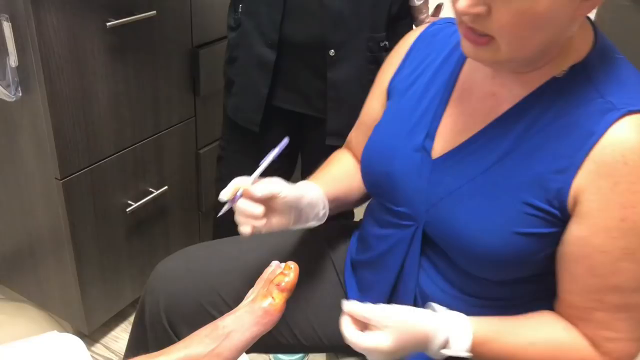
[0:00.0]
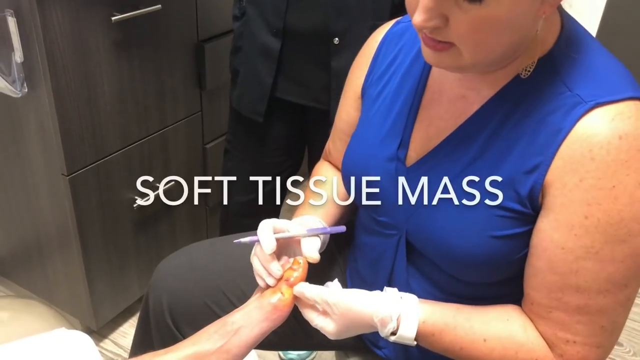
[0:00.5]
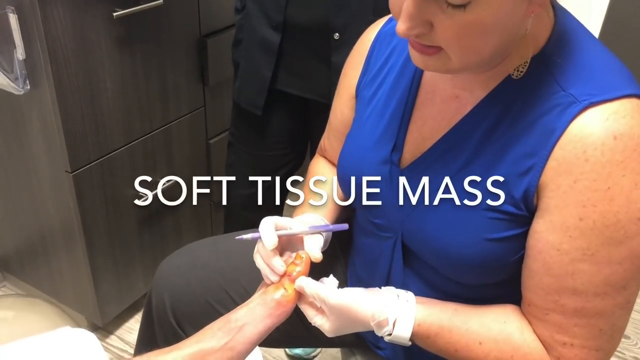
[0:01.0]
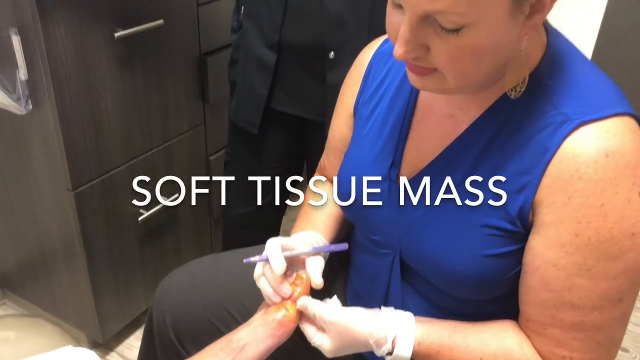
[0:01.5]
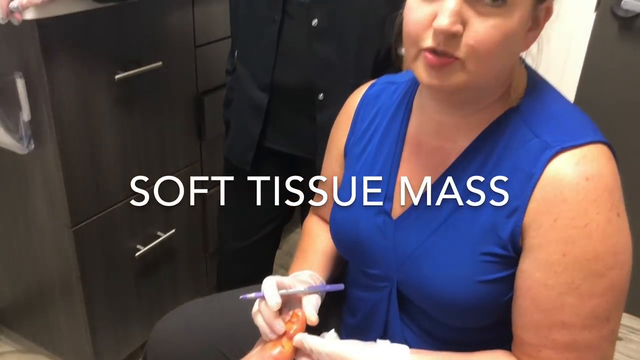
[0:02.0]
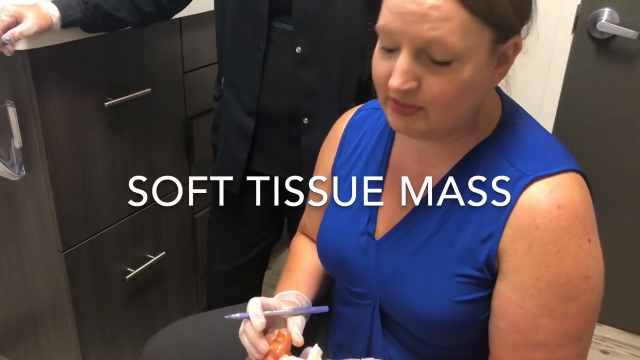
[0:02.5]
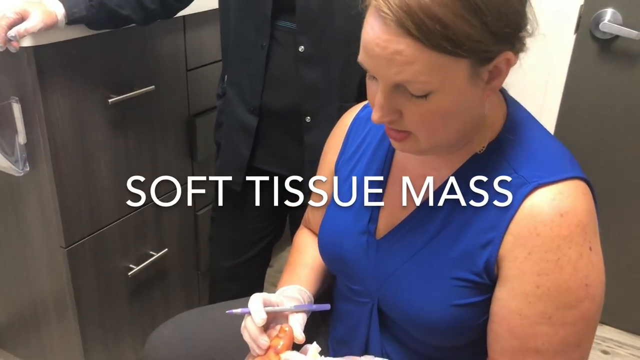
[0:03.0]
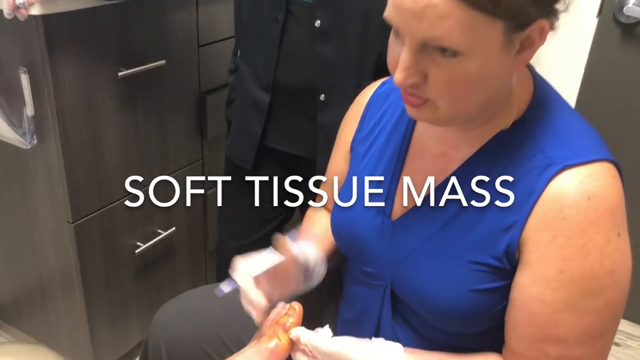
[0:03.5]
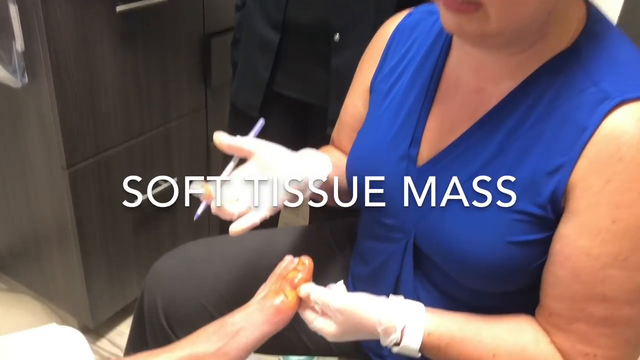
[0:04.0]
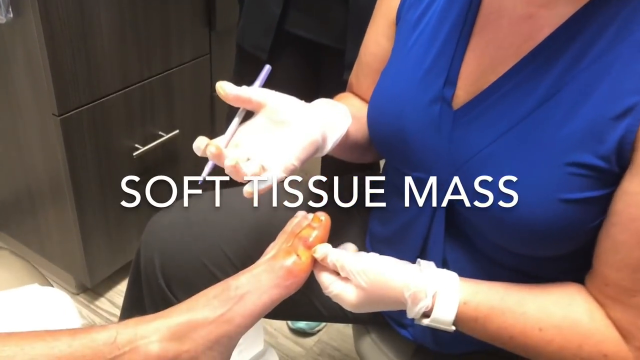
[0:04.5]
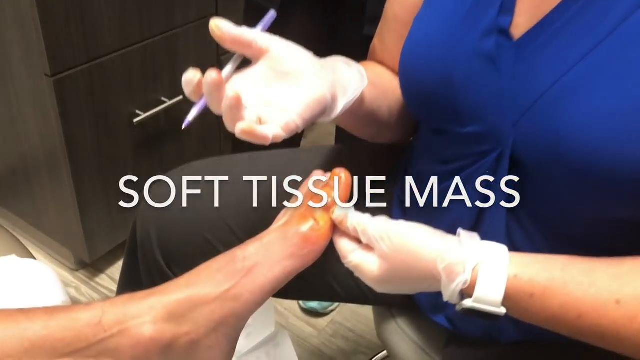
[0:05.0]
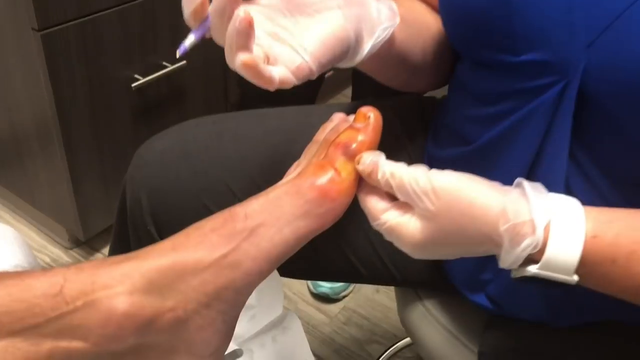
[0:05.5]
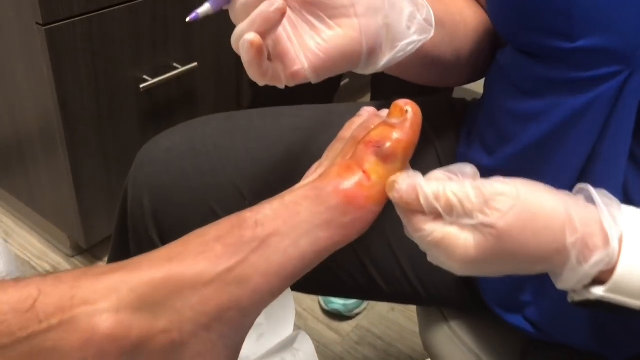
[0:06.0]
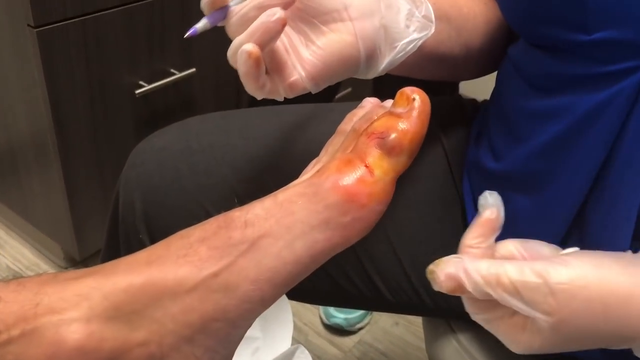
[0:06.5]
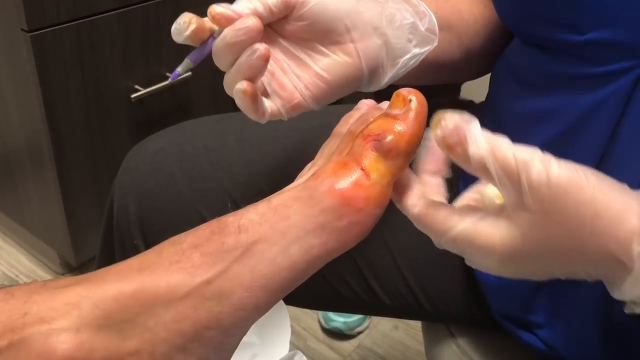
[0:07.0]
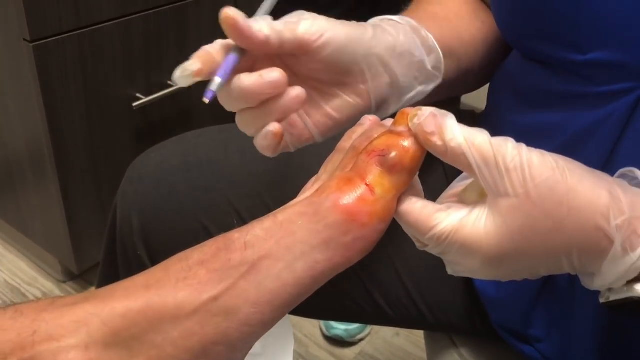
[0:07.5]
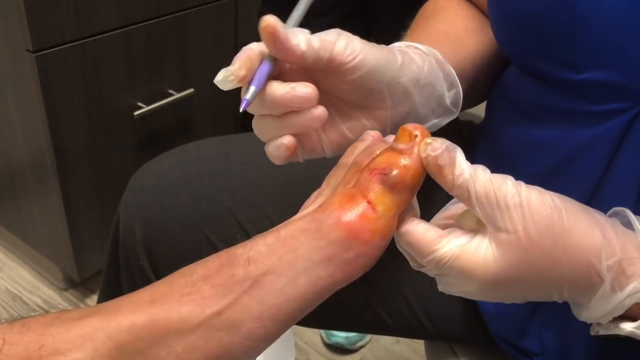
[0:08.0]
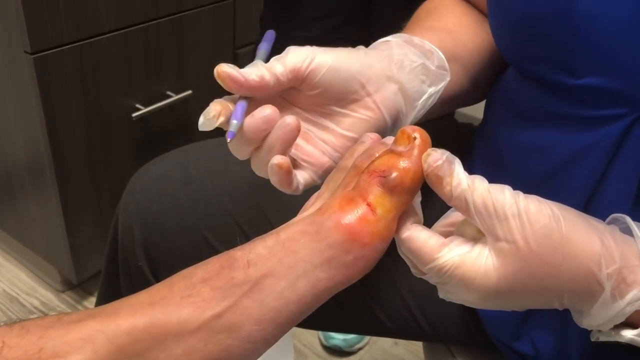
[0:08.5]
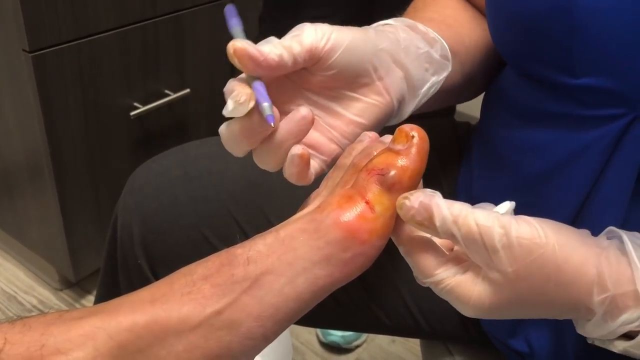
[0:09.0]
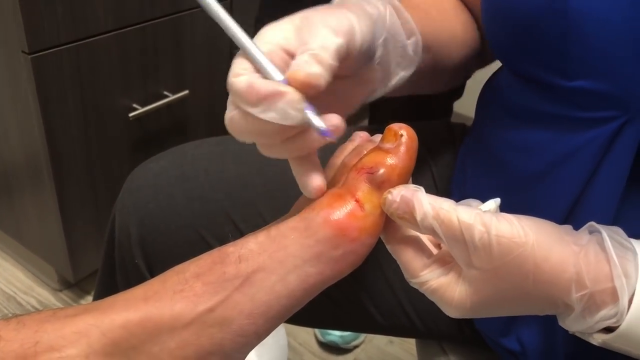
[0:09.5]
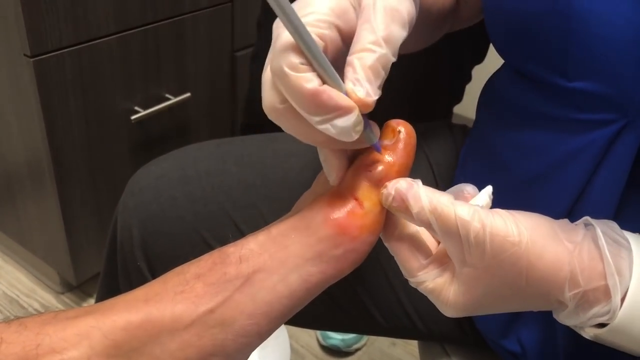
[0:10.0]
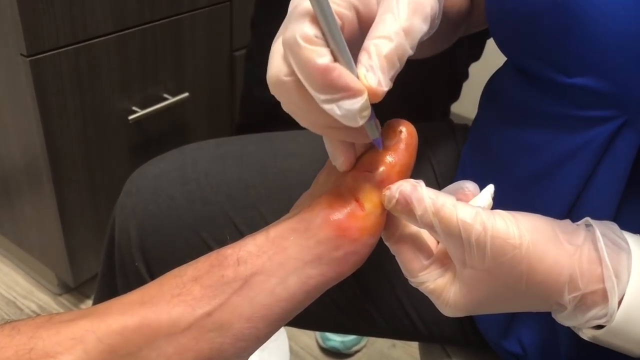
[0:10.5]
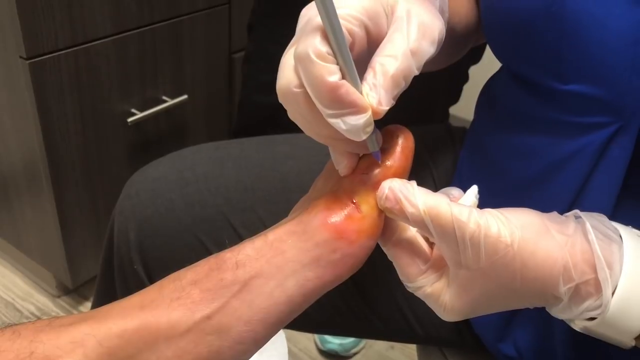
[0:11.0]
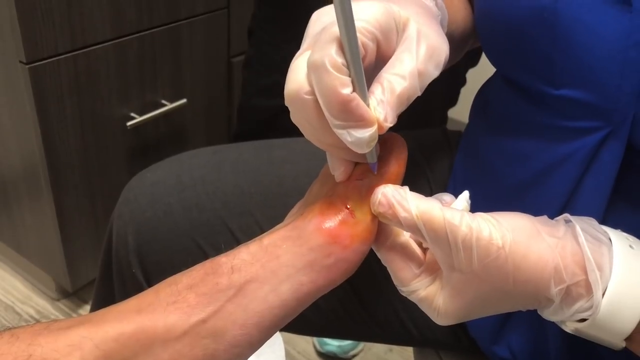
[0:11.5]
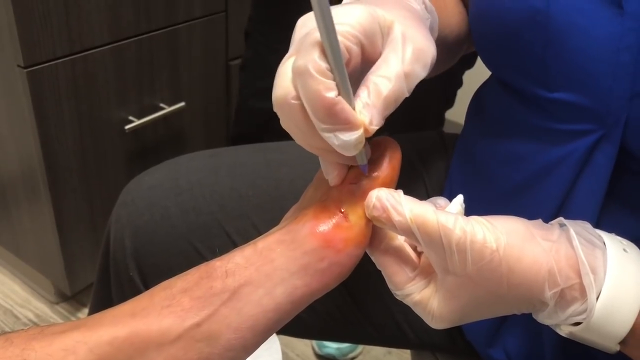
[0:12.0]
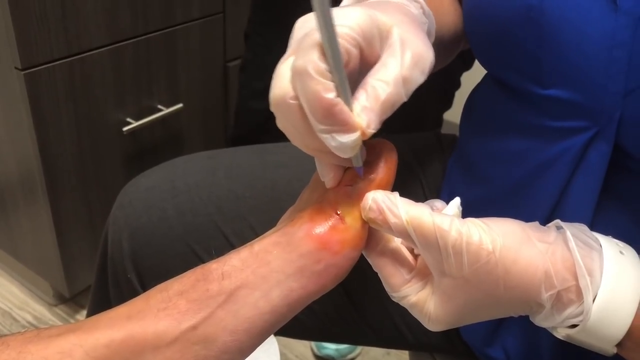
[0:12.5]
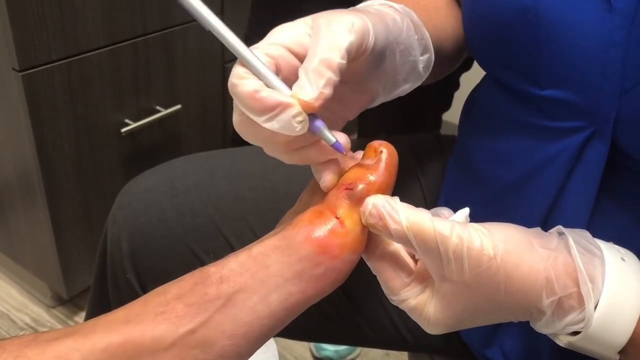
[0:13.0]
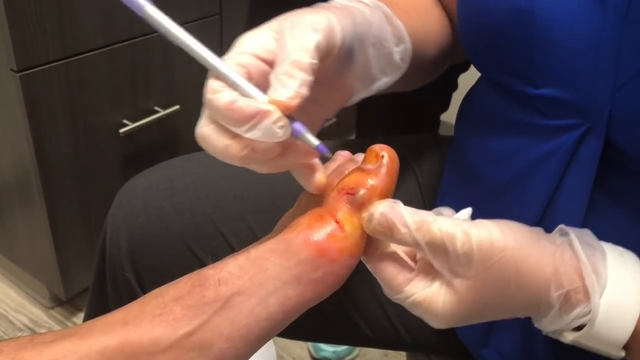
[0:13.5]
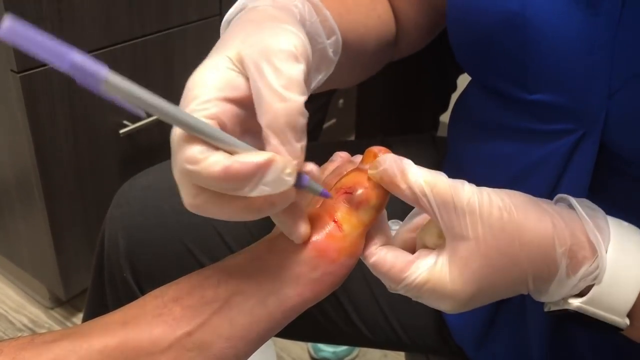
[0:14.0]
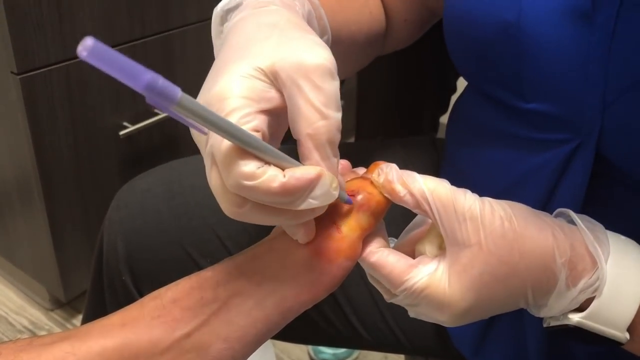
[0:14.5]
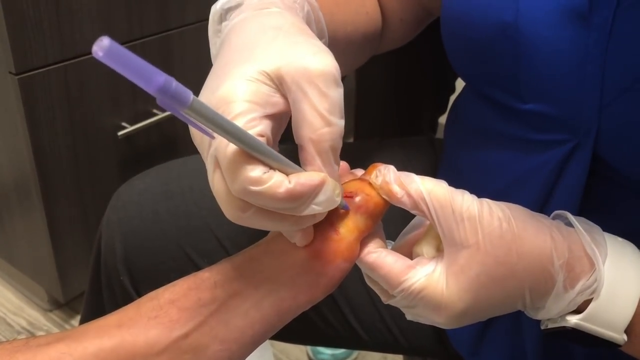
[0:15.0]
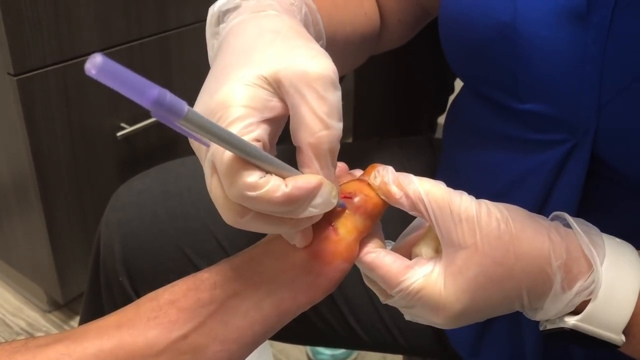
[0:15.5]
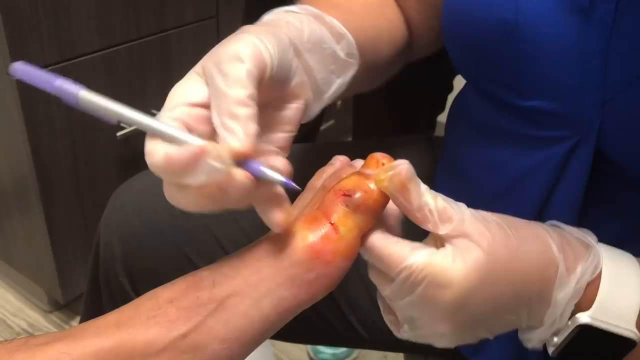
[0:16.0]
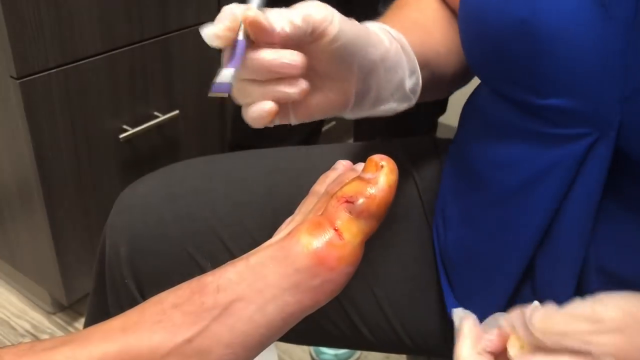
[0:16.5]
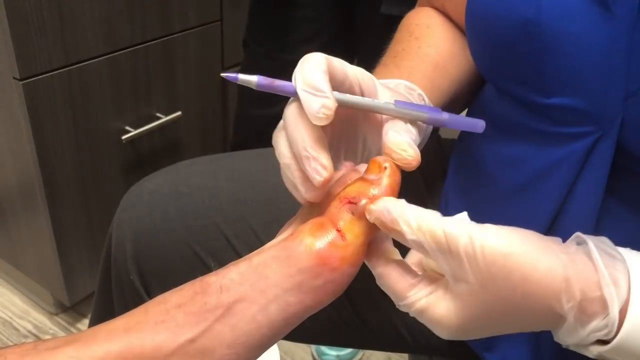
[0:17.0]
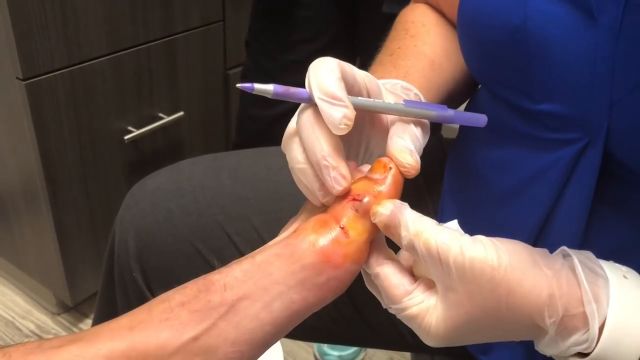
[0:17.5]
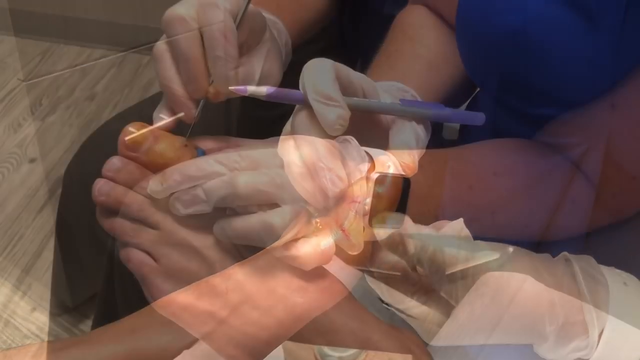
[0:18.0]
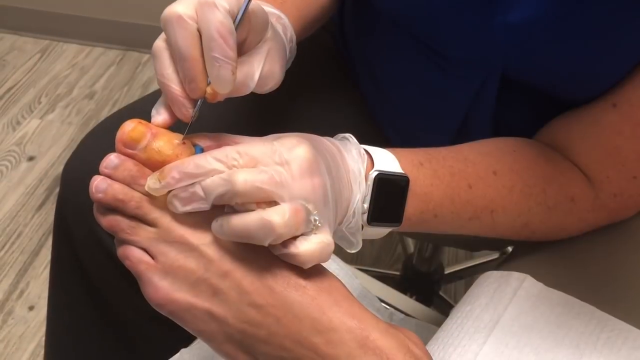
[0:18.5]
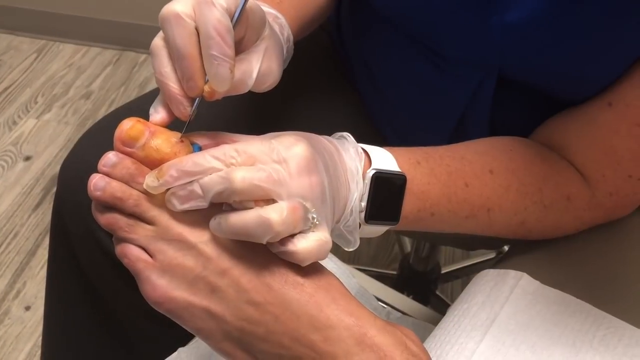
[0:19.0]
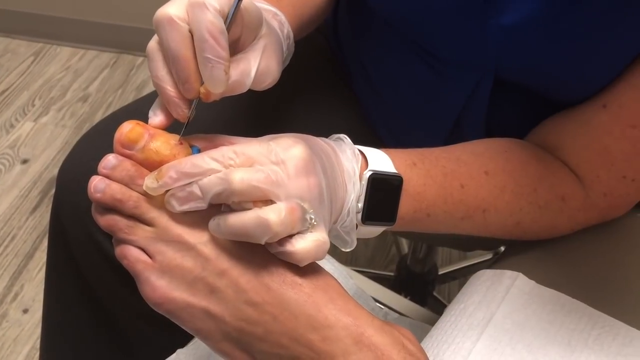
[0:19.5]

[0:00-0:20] A woman has a purple pen in her right hand. In the middle of the screen, the words "soft tissue mass" appear. The video then shows a close-up angle of a foot: the person's toe is heavily bruised, with some cuts. The woman makes markings on the toe with the purple pen. The video is in a rectangular frame and was taken indoors, with a good amount of artificial light making everything clear and visible. In the background there are several gray cabinets. Another person wearing all black scrubs seems to be behind the woman, who is sitting down marking the toe.